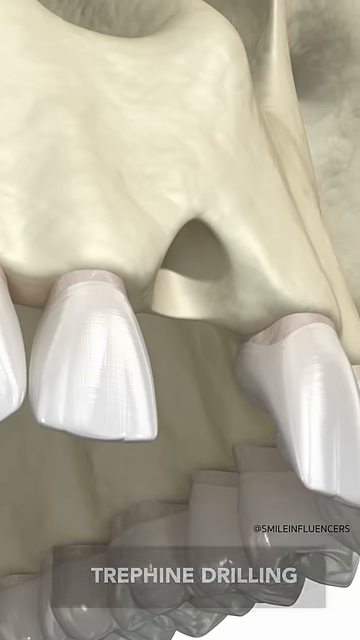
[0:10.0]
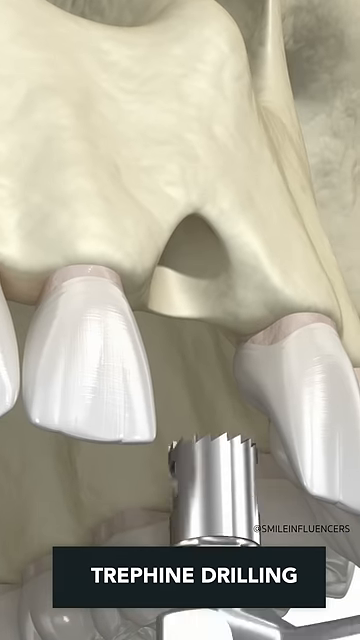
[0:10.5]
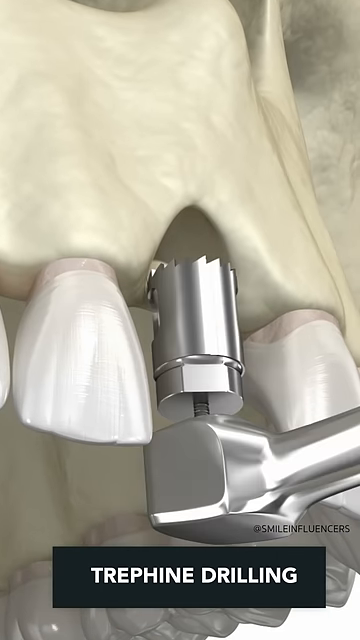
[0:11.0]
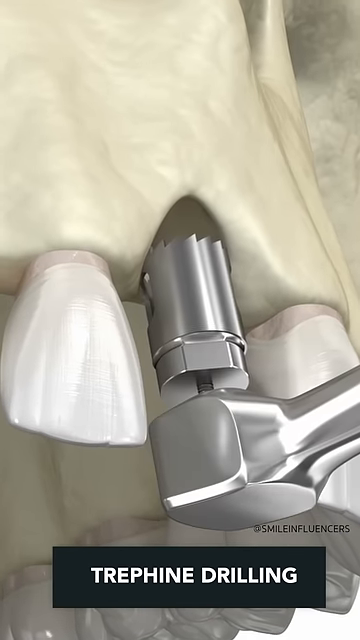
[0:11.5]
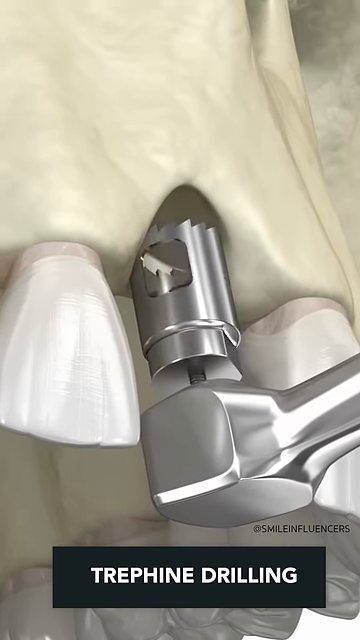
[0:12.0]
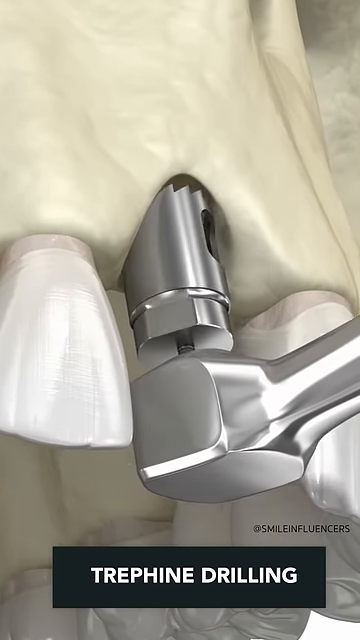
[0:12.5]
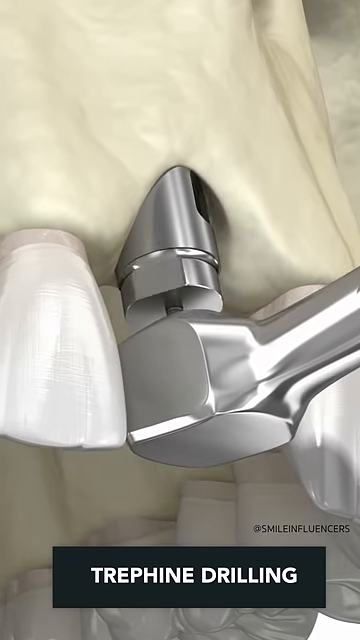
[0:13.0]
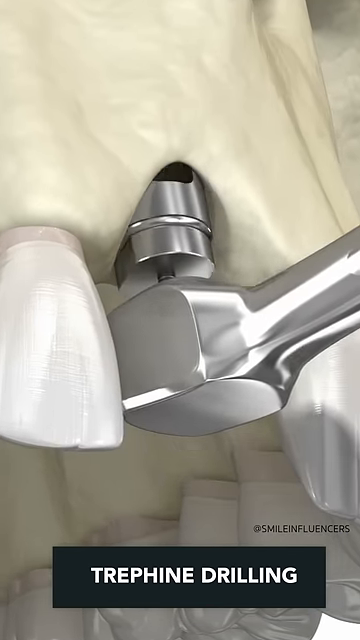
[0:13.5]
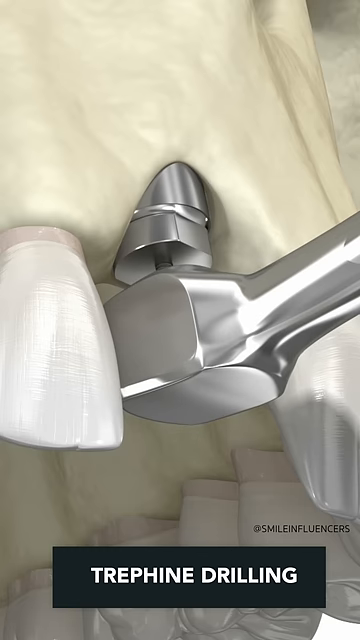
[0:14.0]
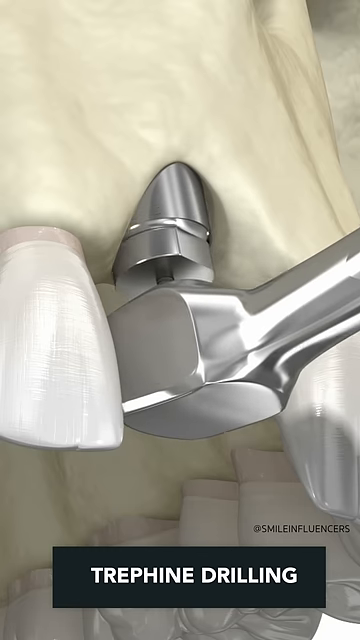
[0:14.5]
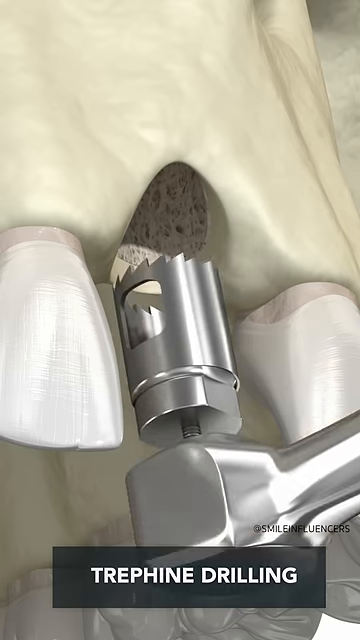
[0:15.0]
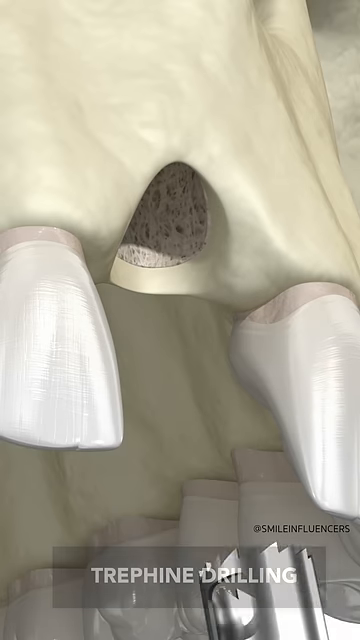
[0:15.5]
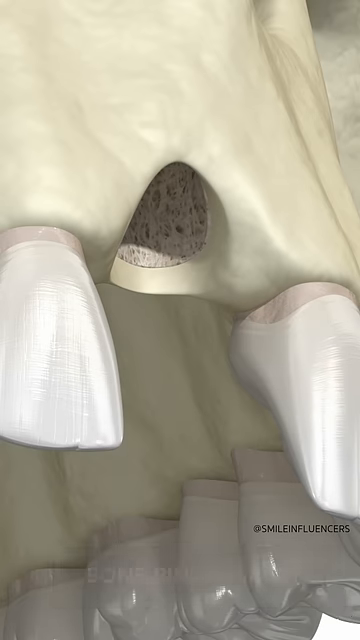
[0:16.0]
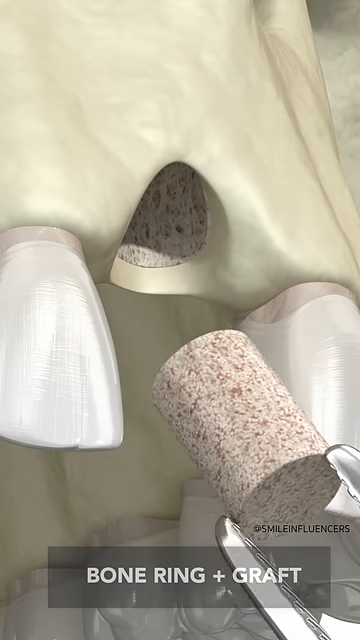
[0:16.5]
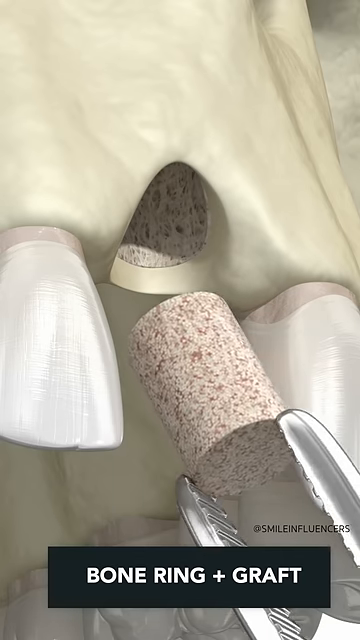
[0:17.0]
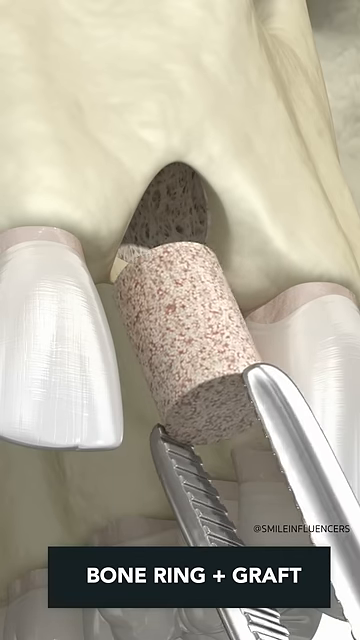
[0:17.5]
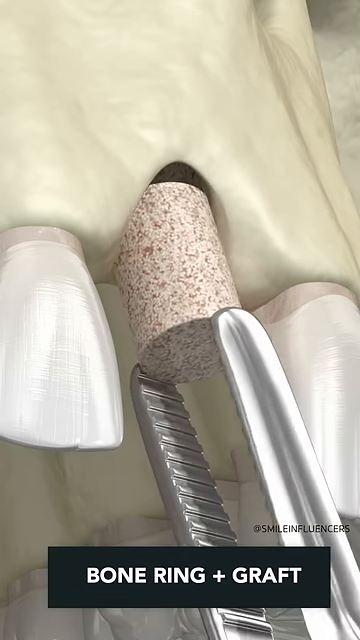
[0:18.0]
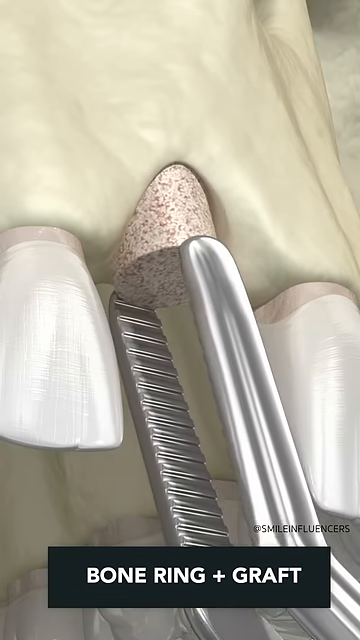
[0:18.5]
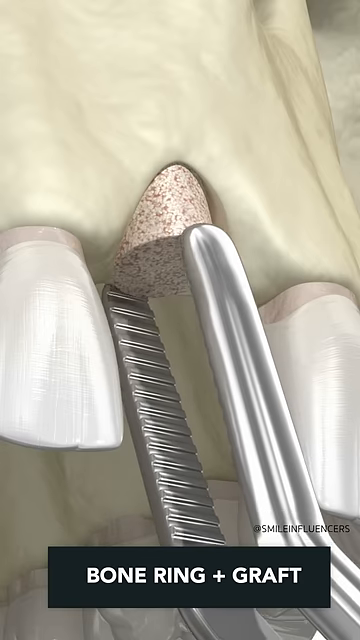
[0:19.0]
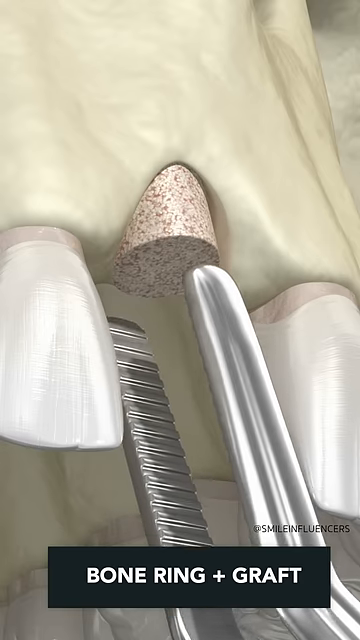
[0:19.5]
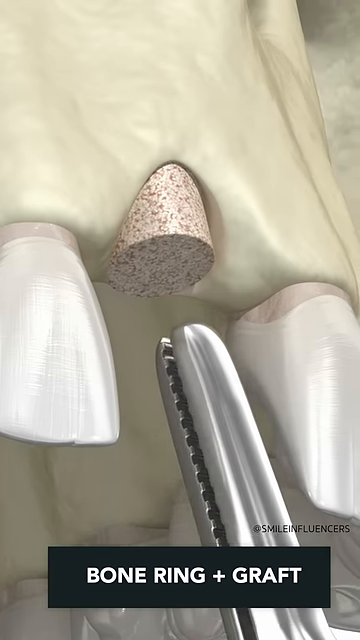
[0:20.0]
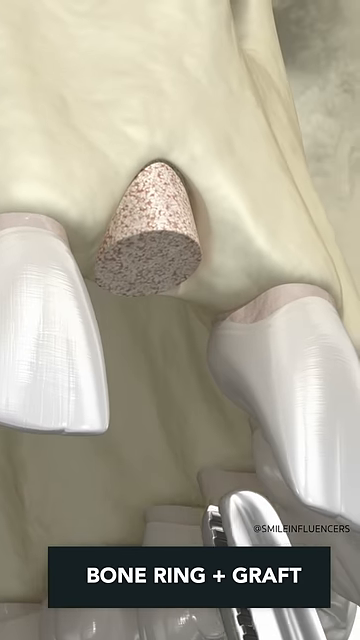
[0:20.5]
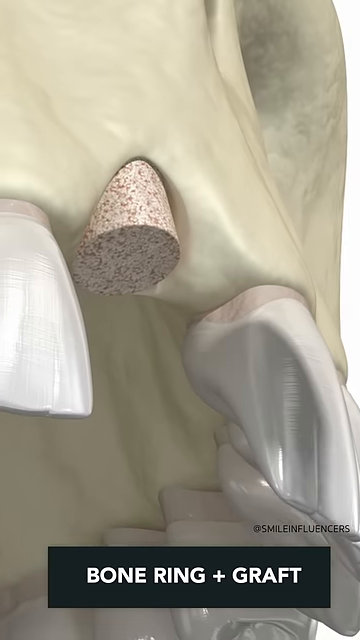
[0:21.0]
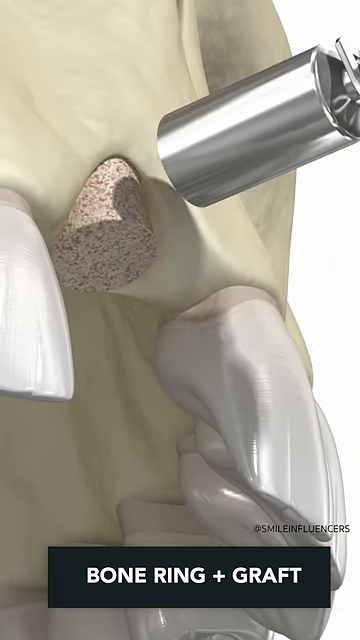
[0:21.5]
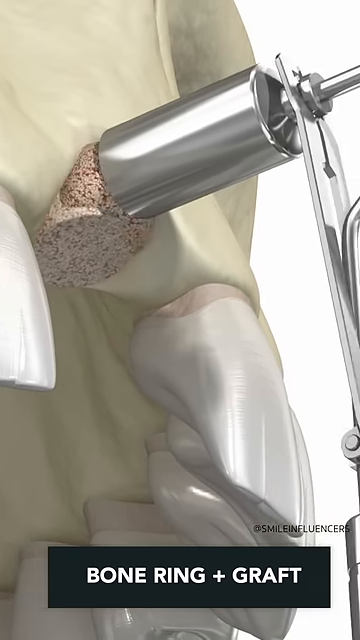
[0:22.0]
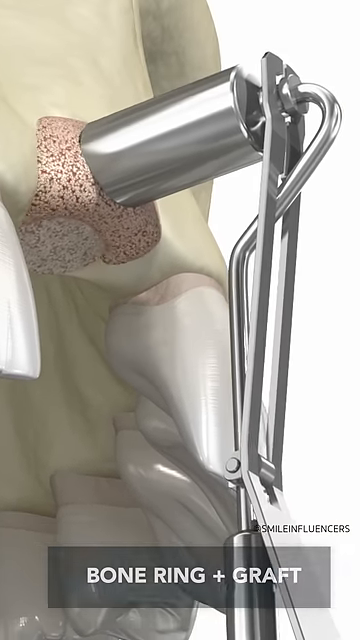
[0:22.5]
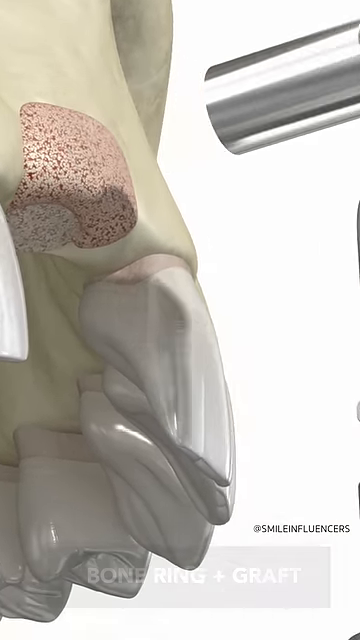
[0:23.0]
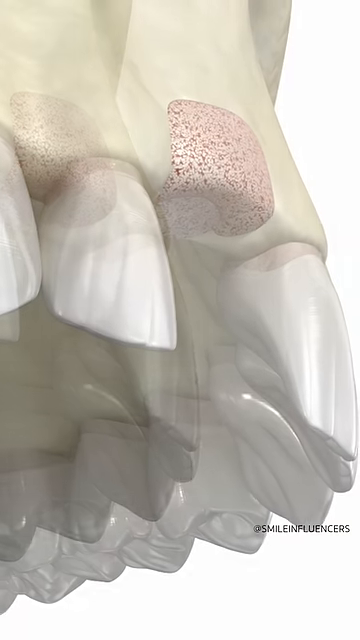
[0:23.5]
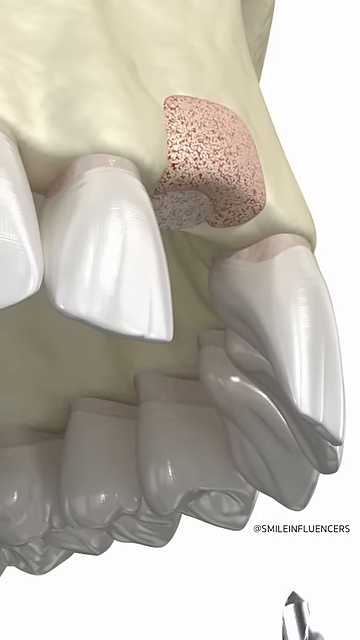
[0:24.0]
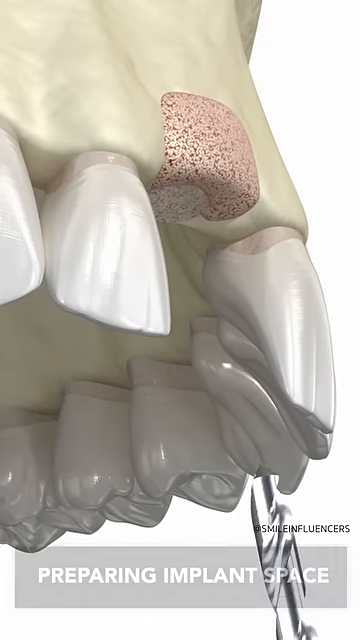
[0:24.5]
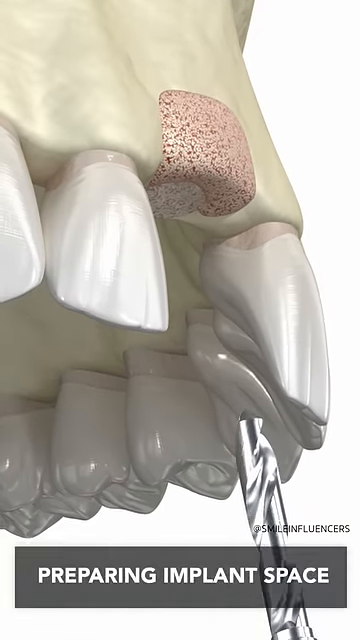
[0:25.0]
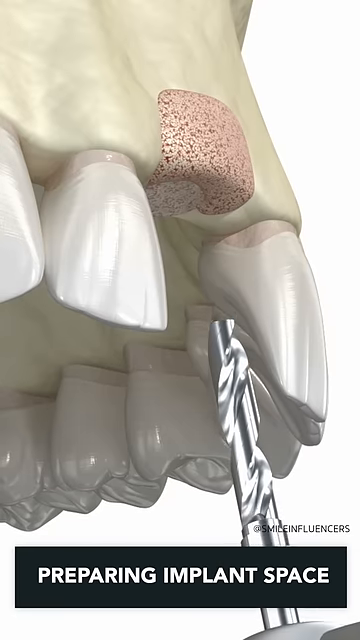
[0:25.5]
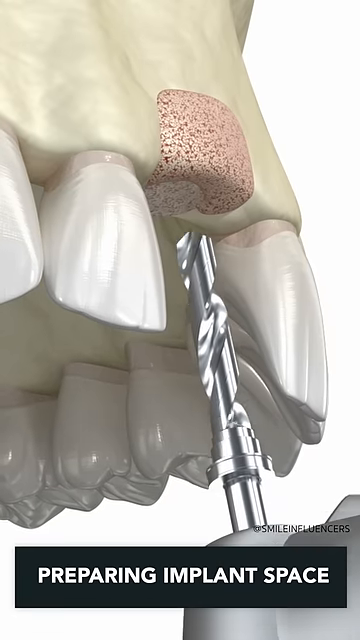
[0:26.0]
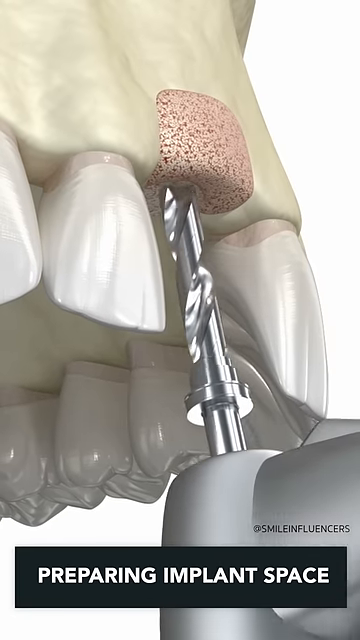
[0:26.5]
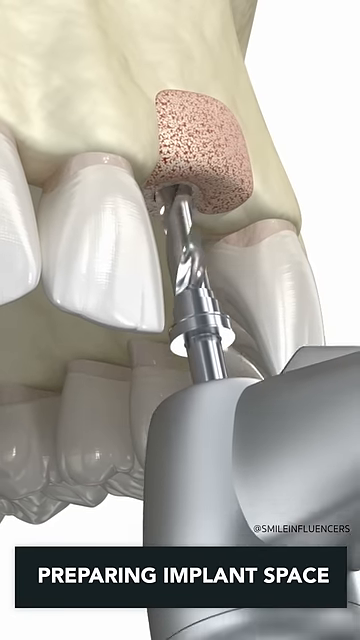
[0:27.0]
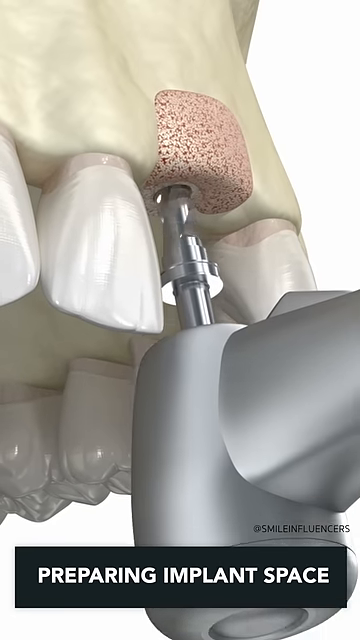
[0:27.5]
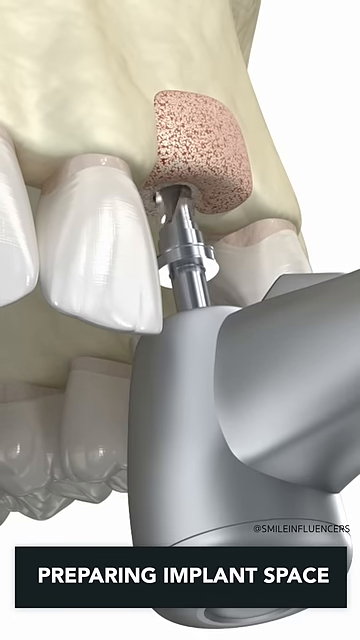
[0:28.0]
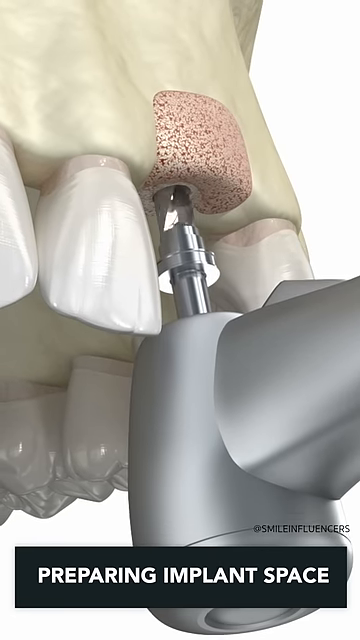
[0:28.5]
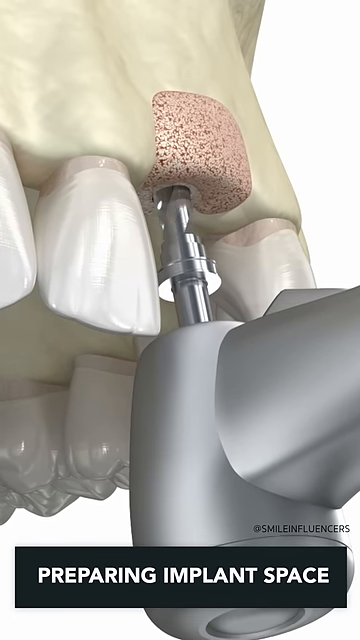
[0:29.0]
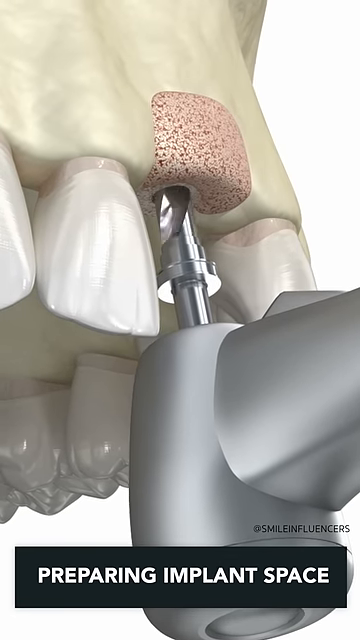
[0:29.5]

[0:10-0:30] A close-up of a digital human skull, not a real one, shows the front portion of the face and some of the front teeth. There is a hole where a tooth used to be in the top portion of the gums and jaw. At the bottom of the screen a banner reads "Trephine drilling," and right above it is a copyright sign with "SmileInfluencer" next to it. A dentist drill goes up into the hole in the jaw. A banner at the bottom then reads "bone ring plus graft," and a surgeon's tool places a round tube piece of material into the hole. Another dentist tool appears and more material is placed over the area where the tooth implant will go, with a banner at the bottom reading "preparing implant space." After that, a dentist drill drills up into the material.